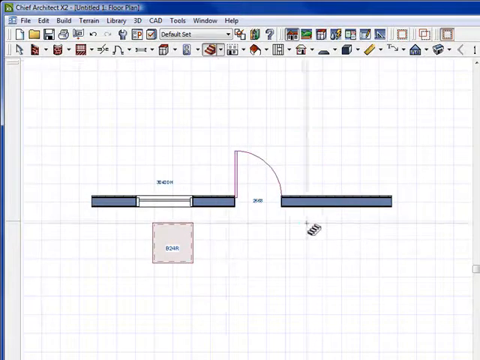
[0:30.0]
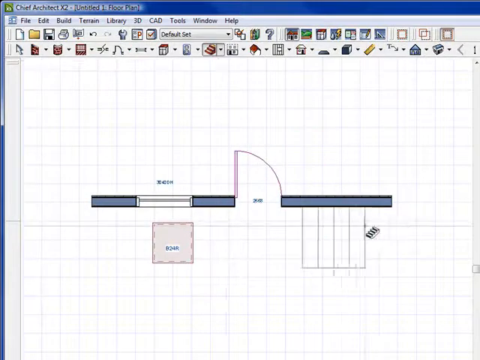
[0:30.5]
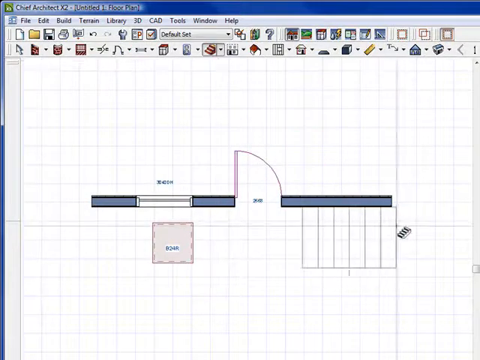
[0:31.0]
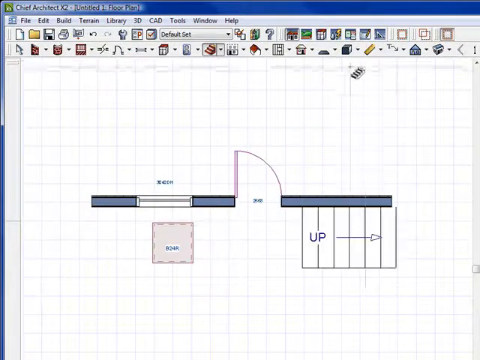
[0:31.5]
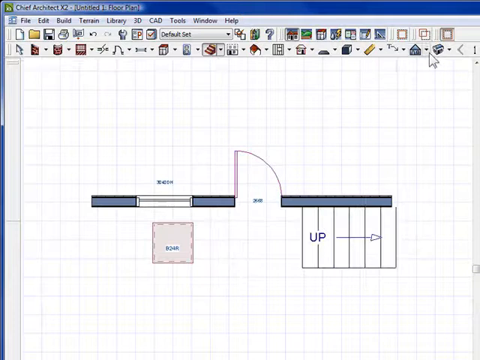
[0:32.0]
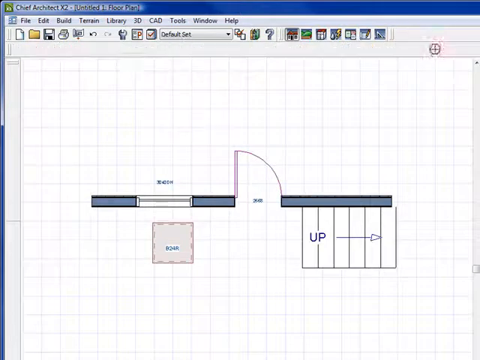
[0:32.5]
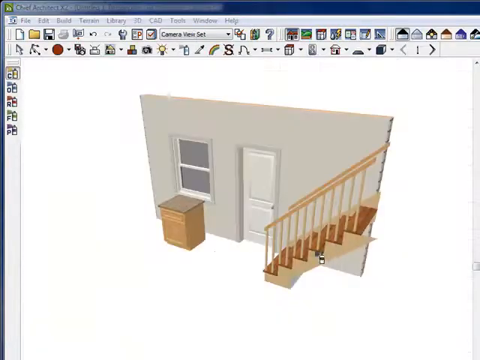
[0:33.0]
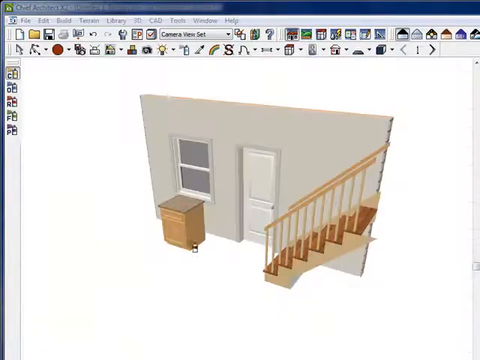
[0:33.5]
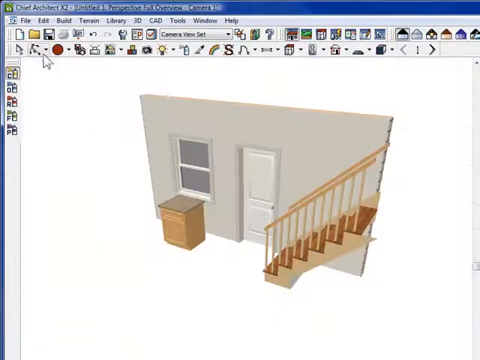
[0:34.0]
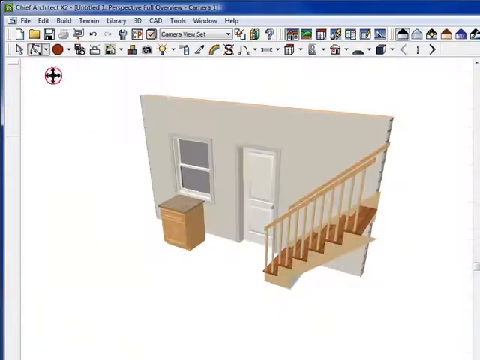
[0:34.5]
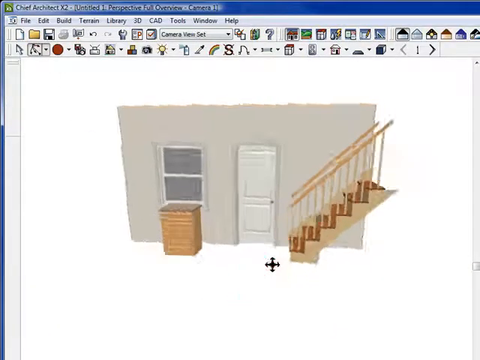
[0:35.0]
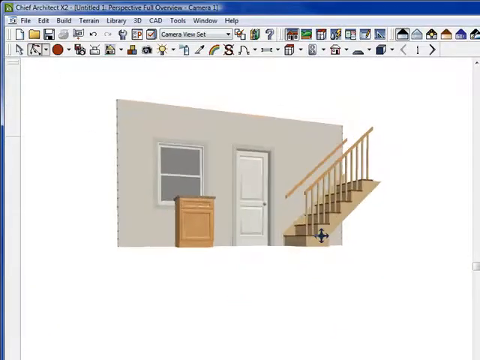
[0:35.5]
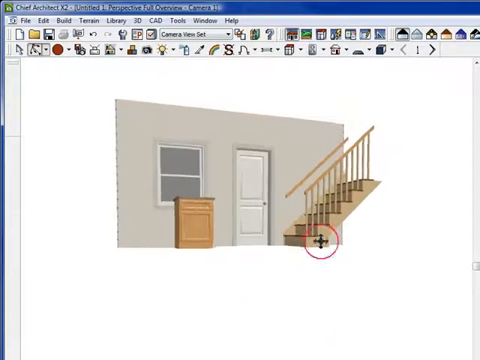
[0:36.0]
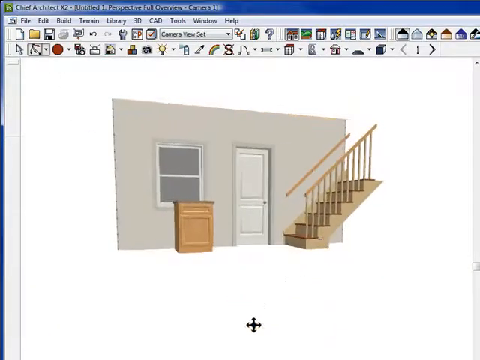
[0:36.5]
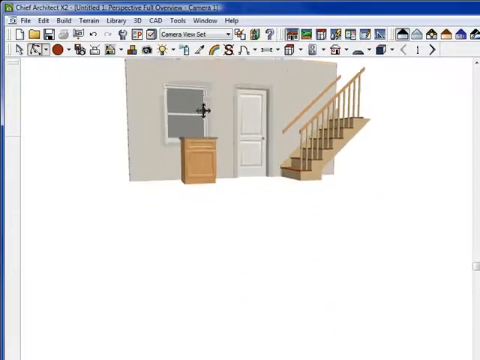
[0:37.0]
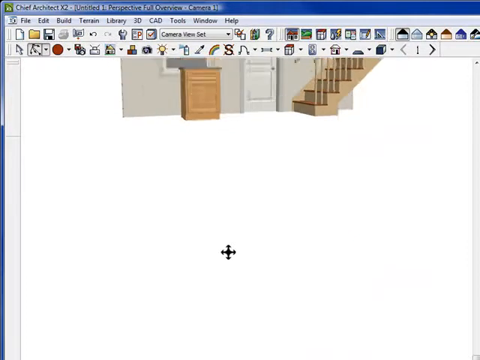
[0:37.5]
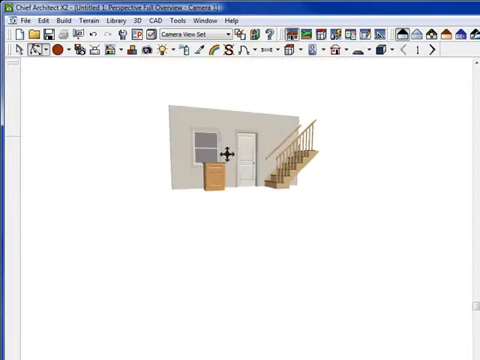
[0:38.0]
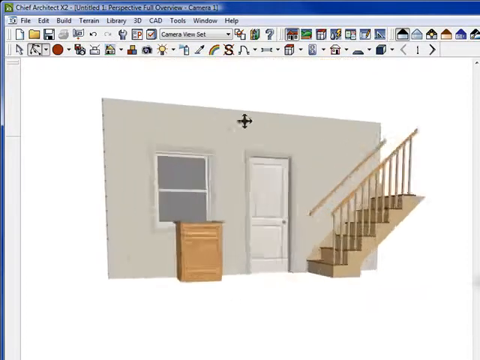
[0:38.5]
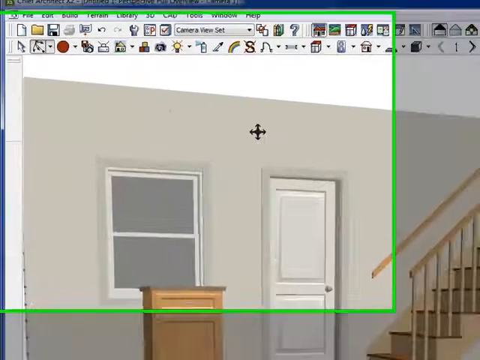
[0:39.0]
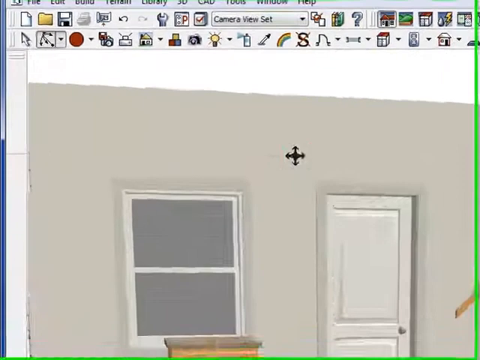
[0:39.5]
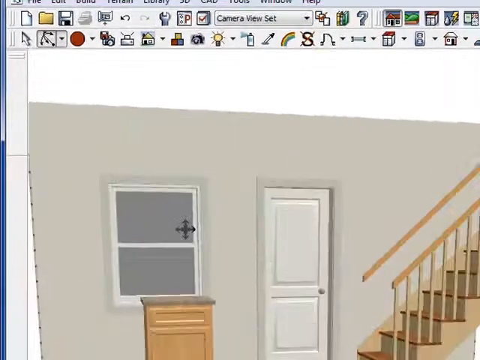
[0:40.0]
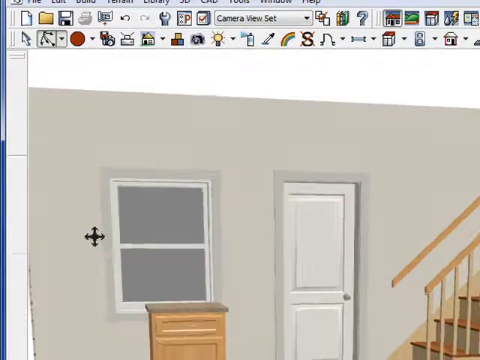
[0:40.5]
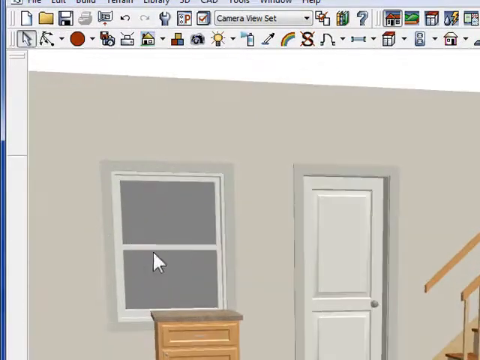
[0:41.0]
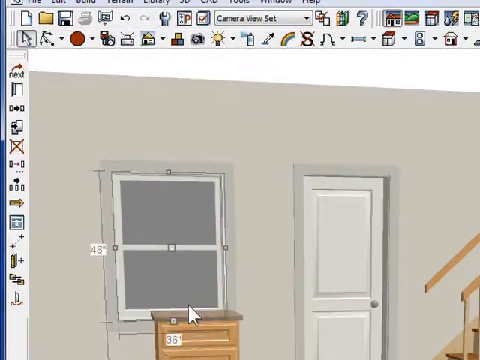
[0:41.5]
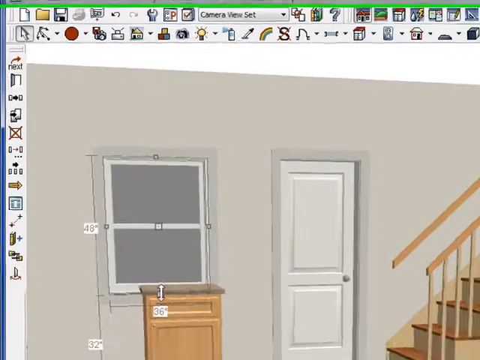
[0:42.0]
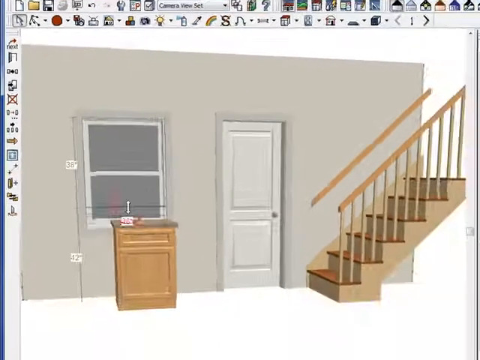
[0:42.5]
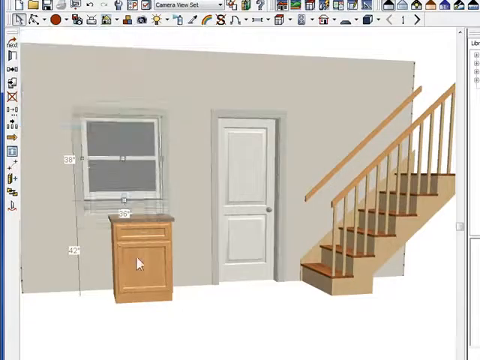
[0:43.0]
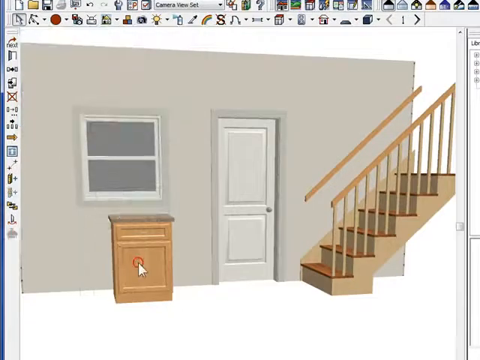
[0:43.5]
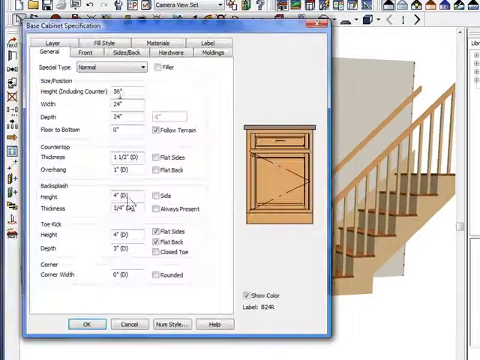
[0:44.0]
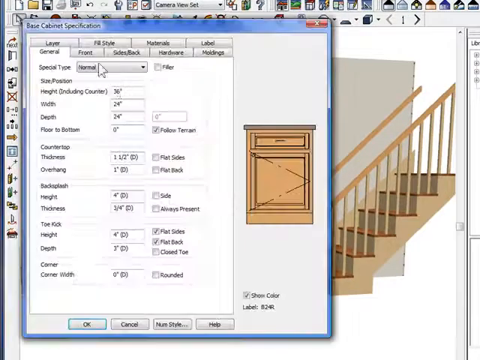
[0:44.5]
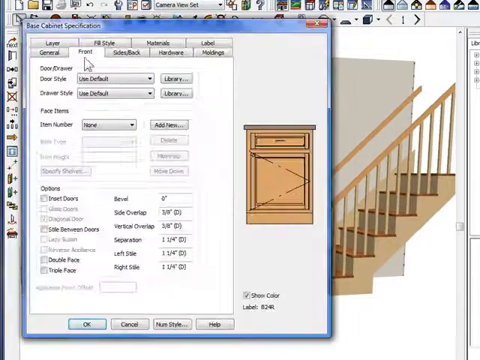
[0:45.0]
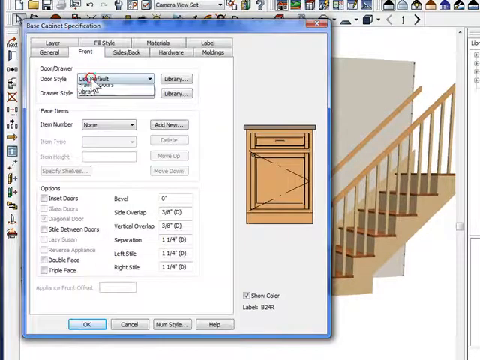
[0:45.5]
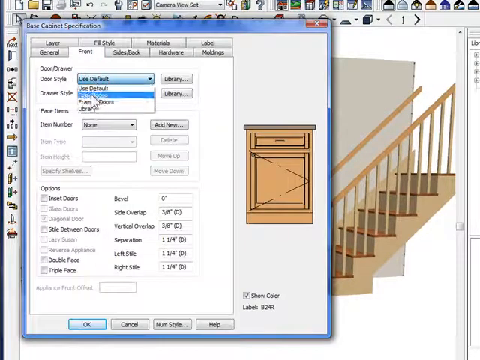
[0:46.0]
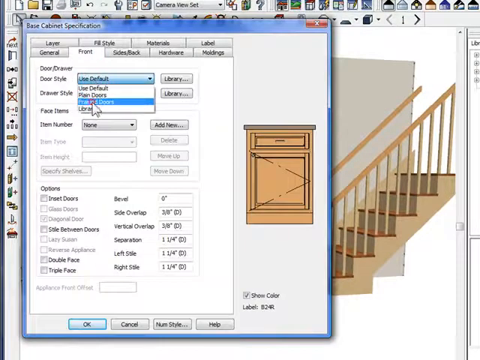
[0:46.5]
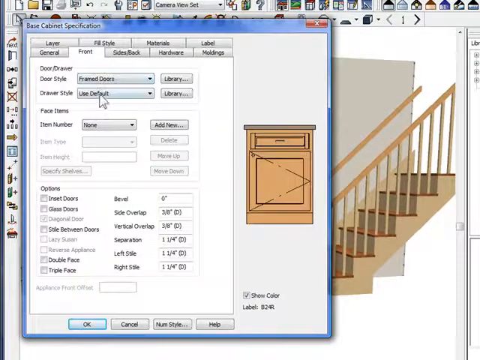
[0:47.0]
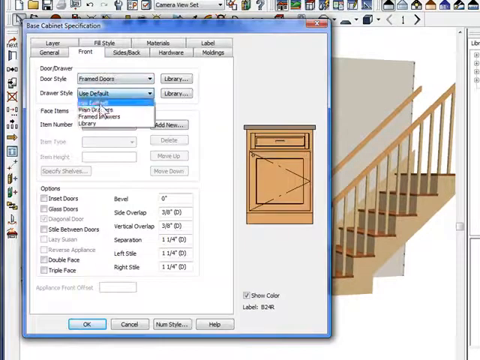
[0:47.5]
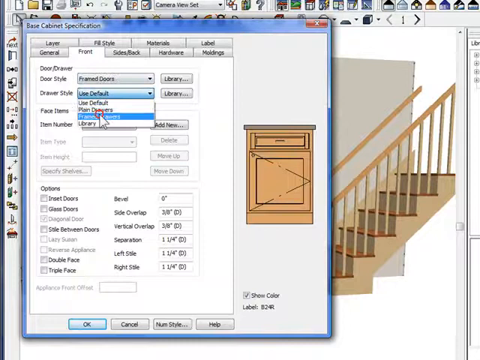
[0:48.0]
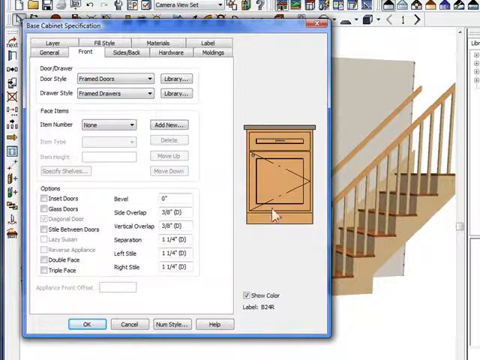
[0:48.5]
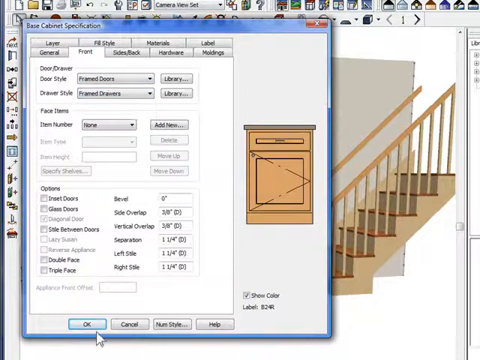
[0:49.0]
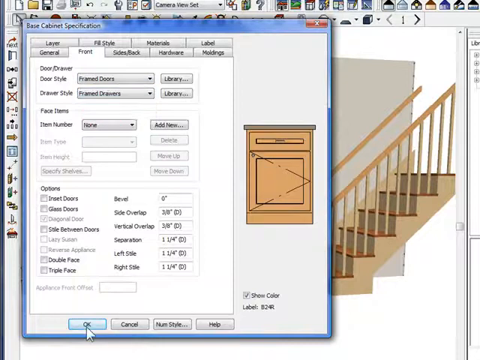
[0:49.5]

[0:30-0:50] The program appears to be for creating architecture or design plans, shown from an aerial view like typical design plans. The top bar and the arc seem to represent a doorway or open door. Underneath the right side of the bar, the interface places a number of small columns or bars next to each other, apparently representing a staircase. The plan apparently shows a wall, an open doorway, a staircase on the right and possibly a table on the left. Then the graph paper is gone and a 3D rendering of the design appears, shown from different angles: a cartoon wall, a wood staircase on the right, the doorway, and the table on the left in front of a two-paned window. The rendering recedes into the background, becoming much smaller, and is then brought up close again. Part of it is then highlighted with an overlapping bright green outline, apparently focusing mostly on the upper left part of the wall. A black cross cursor moves around the program.